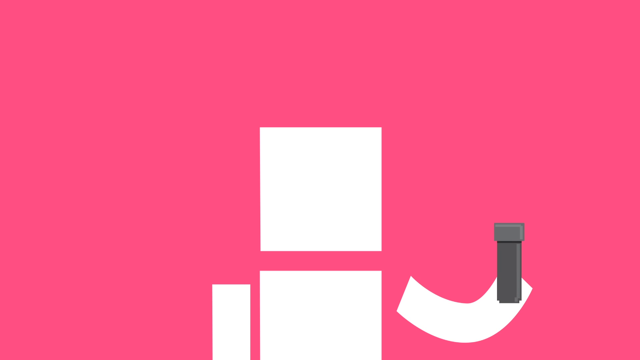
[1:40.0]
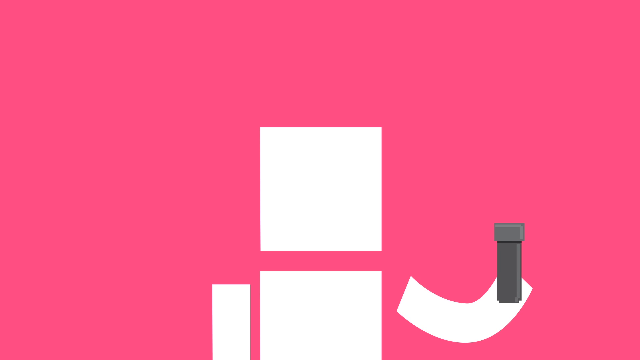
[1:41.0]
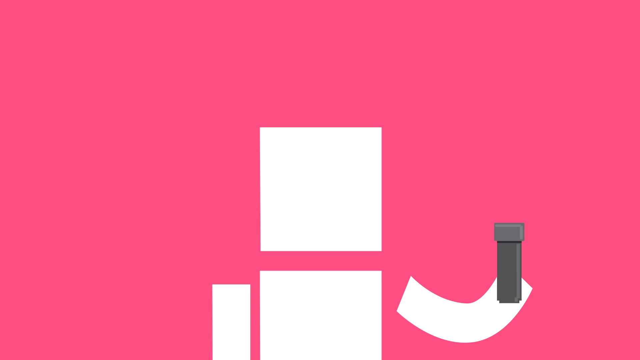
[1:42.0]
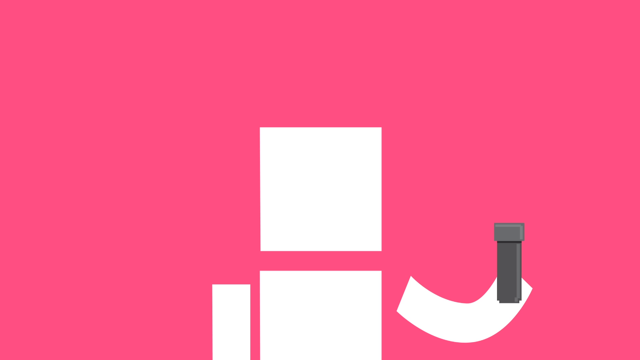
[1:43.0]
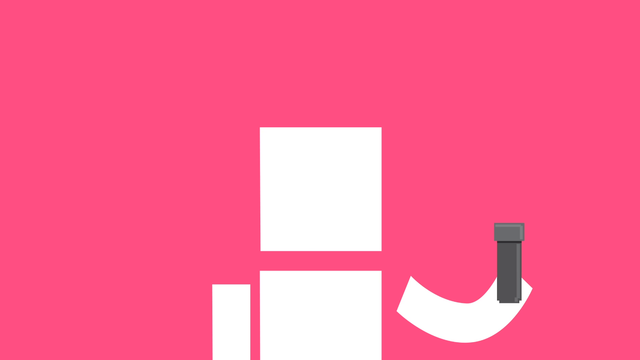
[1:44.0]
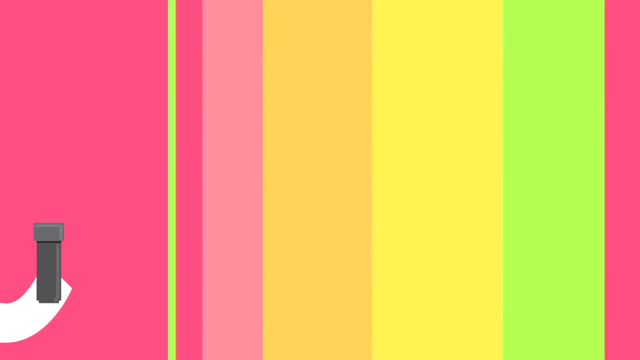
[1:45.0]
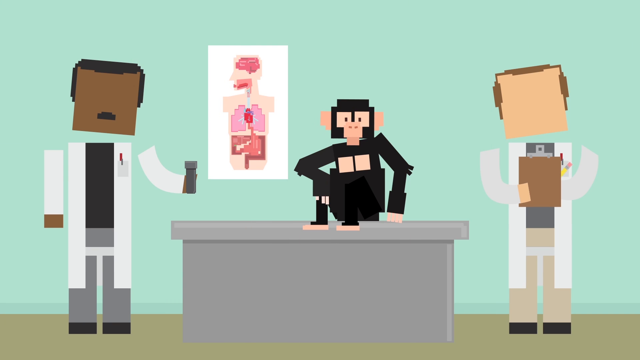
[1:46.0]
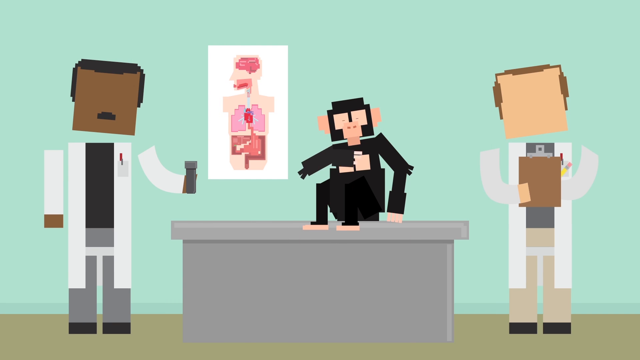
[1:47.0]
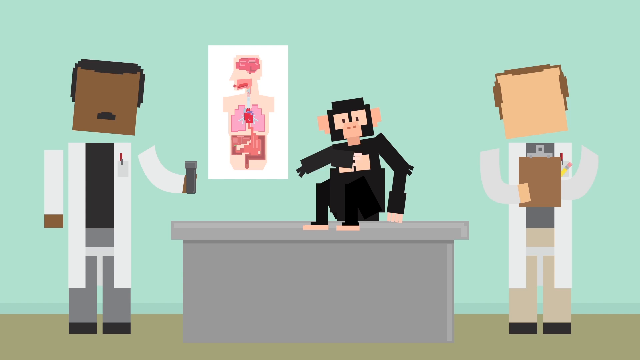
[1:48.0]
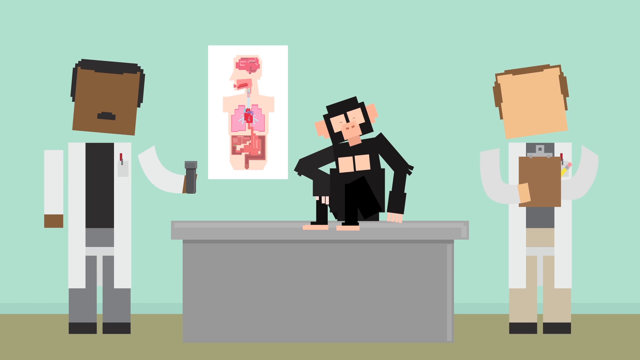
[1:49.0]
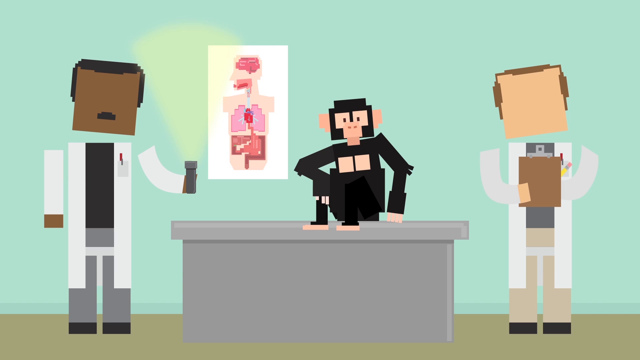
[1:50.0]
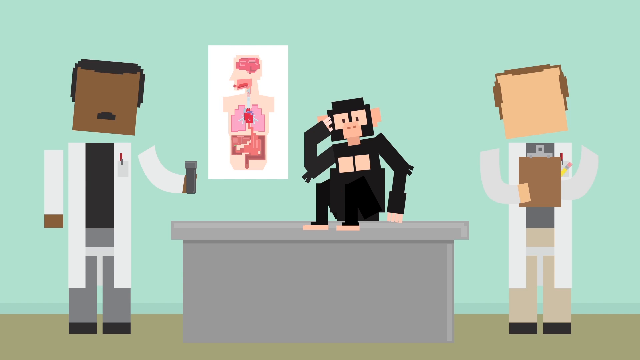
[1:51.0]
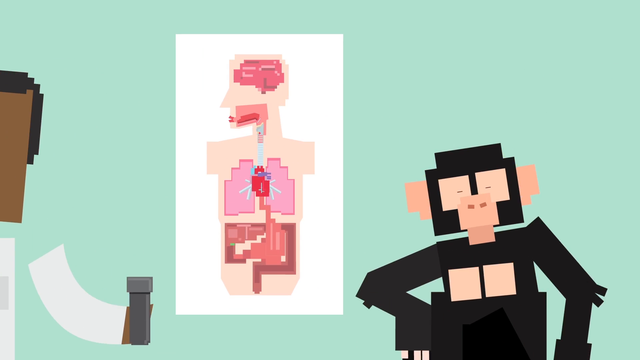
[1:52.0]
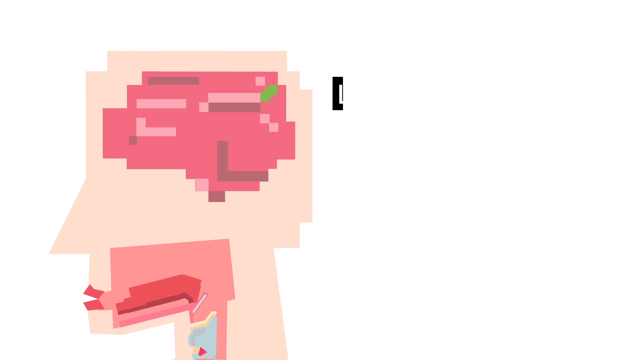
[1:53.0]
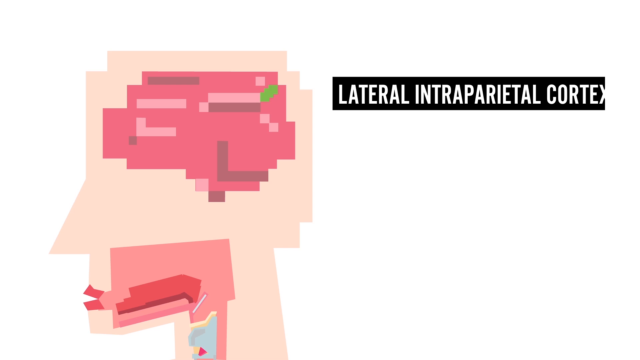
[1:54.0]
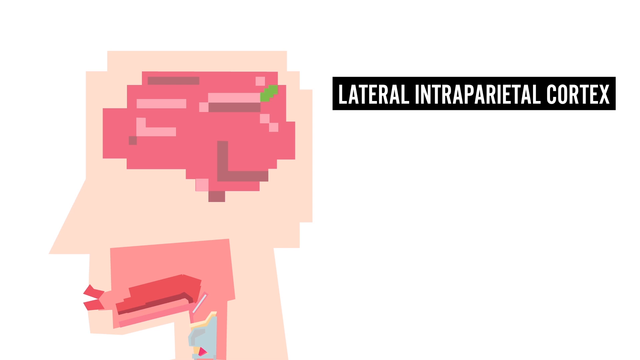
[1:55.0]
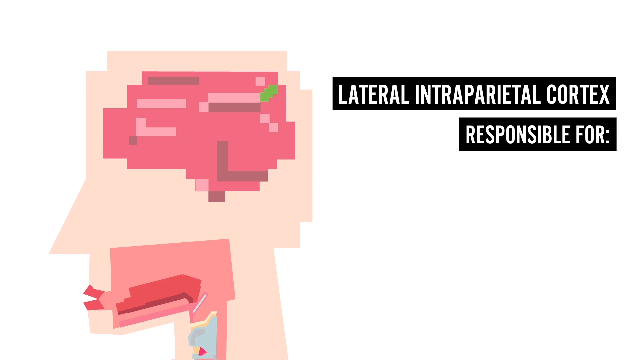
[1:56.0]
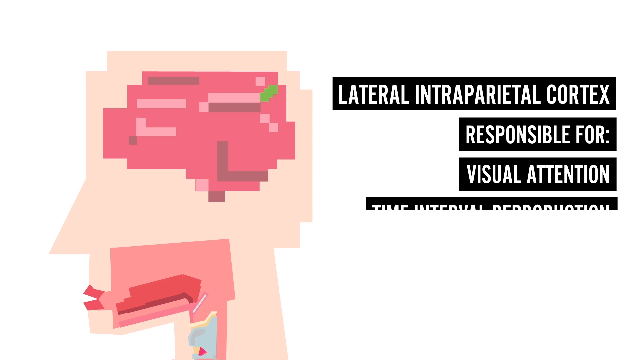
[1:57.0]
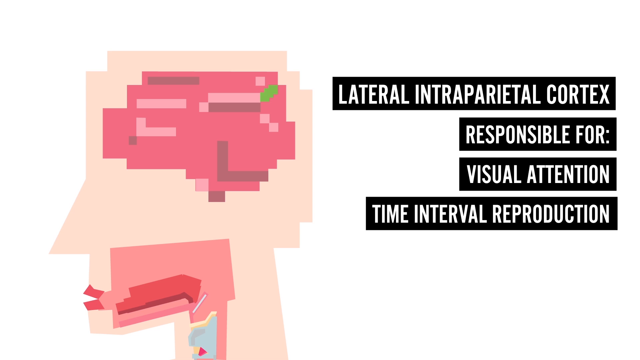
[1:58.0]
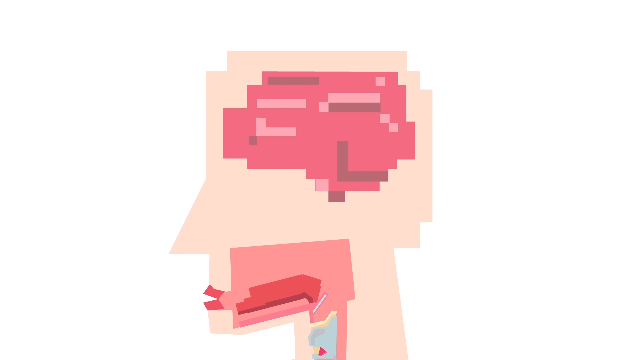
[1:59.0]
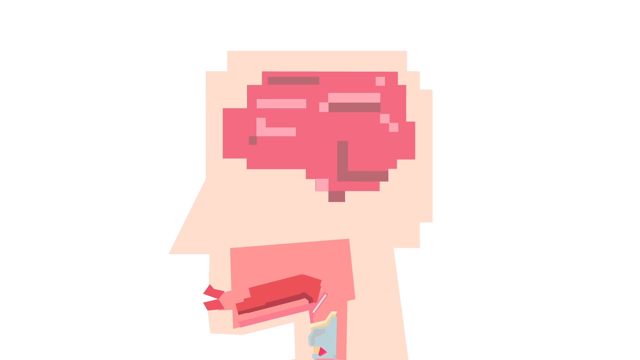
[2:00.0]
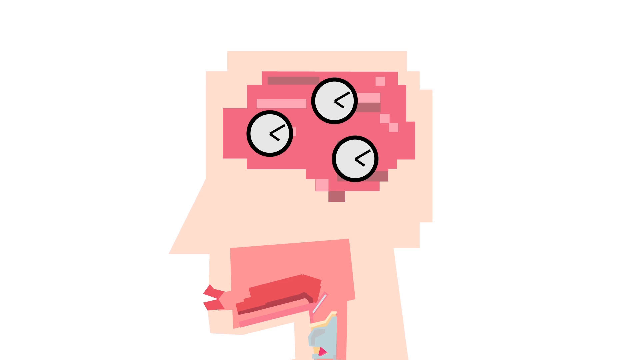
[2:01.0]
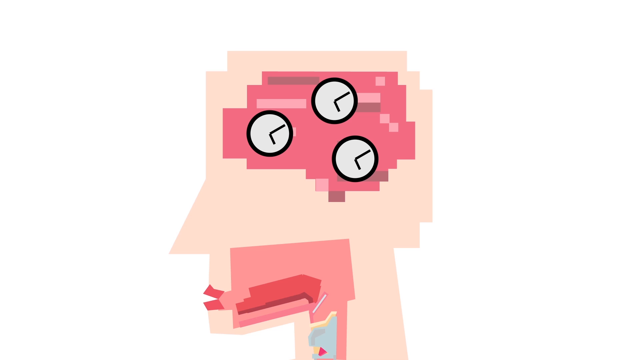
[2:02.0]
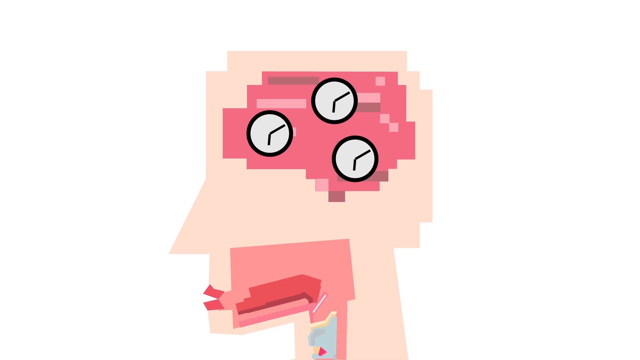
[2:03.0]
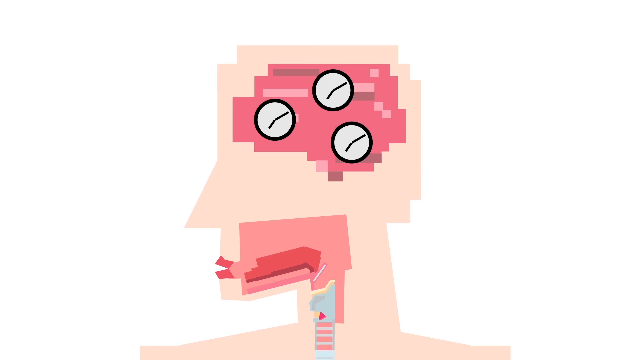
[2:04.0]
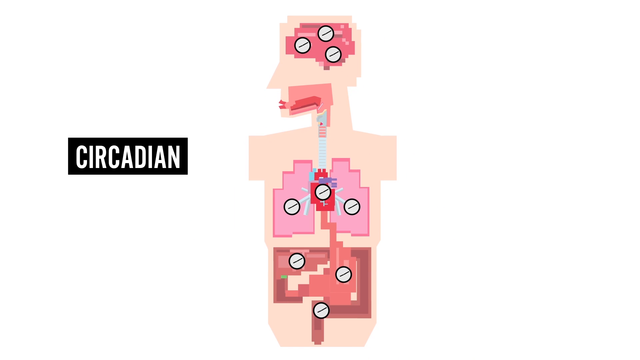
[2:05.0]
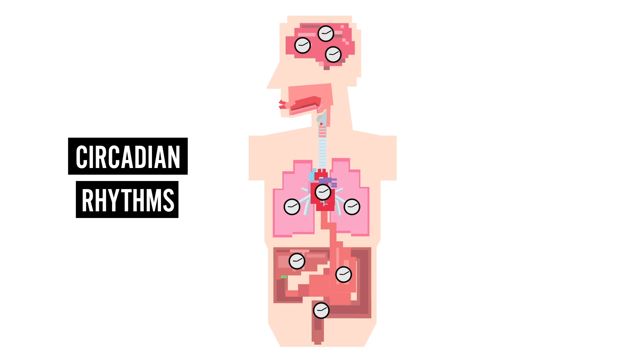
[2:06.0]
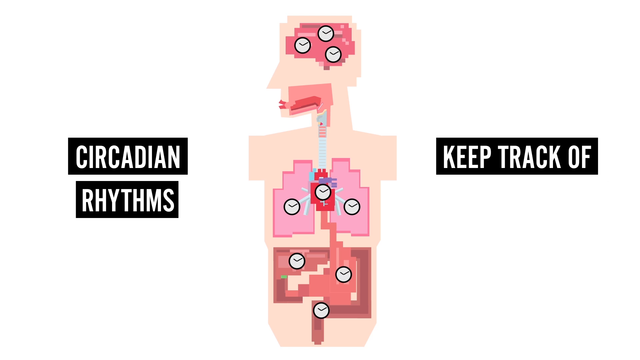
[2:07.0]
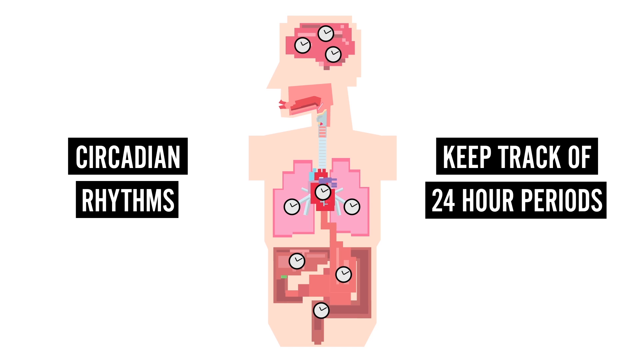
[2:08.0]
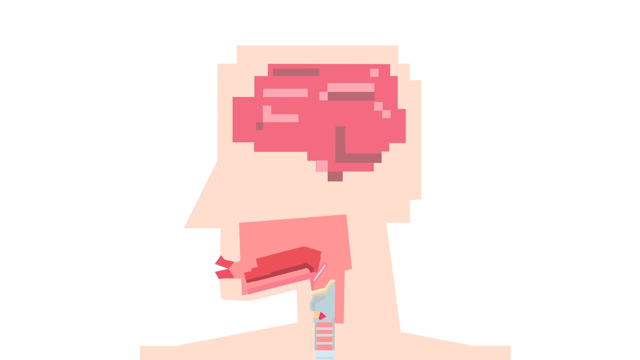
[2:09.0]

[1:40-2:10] The blockhead character rhythmically moves his head up and down, holding the flashlight in his left hand, pointed upward. A multicolored yellow, pinkish-red, and white striped transition wipes across the screen from the right side into a new scene that appears to be a scientific lab. Blockheaded scientists appear to be in white lab coats. A Black American scientist on the left holds a flashlight pointed up, similar to how the blockhead protagonist held his. A gray desk is in the center of the screen, with what appears to be a chimpanzee sitting on the gray desk or laboratory table. To the left of the chimpanzee, mounted on the wall behind him, is an anatomy poster showing a cutaway of the human brain, jaw, mouth, digestive system, lungs, and heart. To the right of the table, a Caucasian blockhead scientist holds a clipboard. The laboratory wall is painted a calming mint green. The monkey or chimpanzee scratches his face multiple times. The camera zooms into the brain on the poster. A graphic wipes in on the right beside the brain reading "lateral intraparietal cortex", with "responsible for visual attention time interval reproduction" below it. The words quickly wipe down to disappear, and the camera centers the brain on the screen. Three clocks appear in the brain area, in the frontal cortex, in the top of the brain, and in the lower back of the brain, and they look like they are advancing rapidly. The camera zooms out to the whole body, where the lungs, digestive tract, stomach, liver, pancreas, and bladder all have their own little clocks running continuously. To the left of the anatomy cutaway, white text on black banding wipes down reading "circadian rhythms", and to the right are the words "keep track of 24-hour periods". The camera zooms back into the brain.